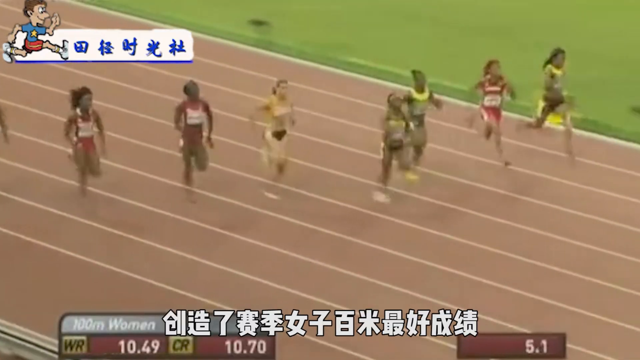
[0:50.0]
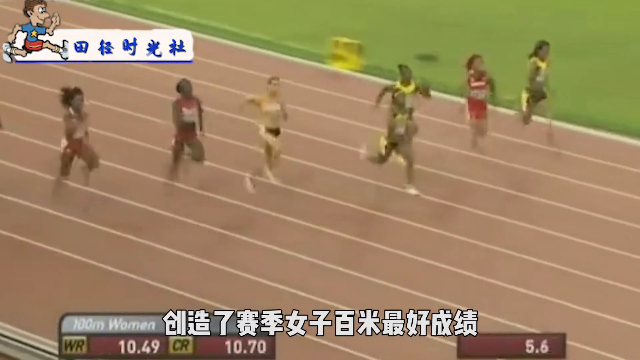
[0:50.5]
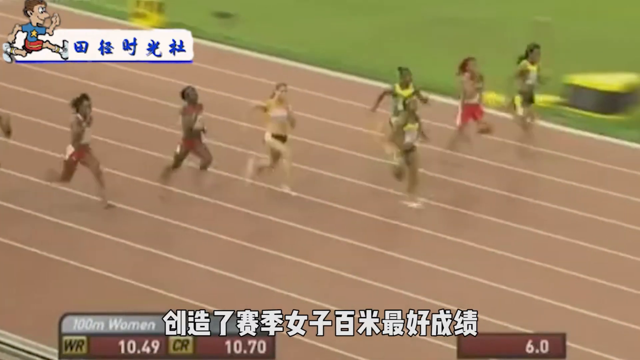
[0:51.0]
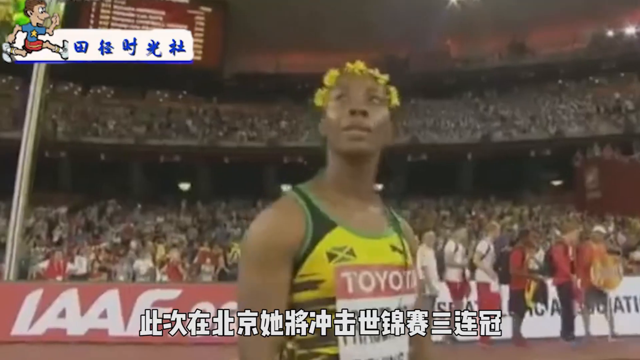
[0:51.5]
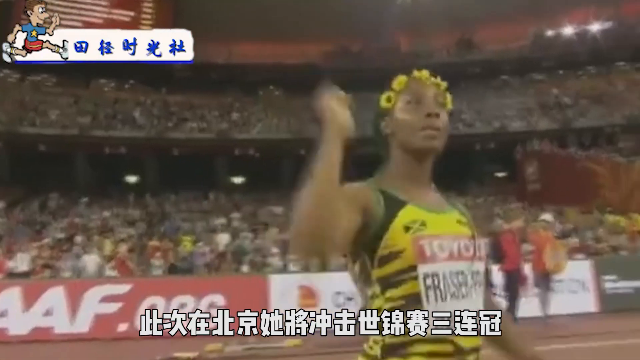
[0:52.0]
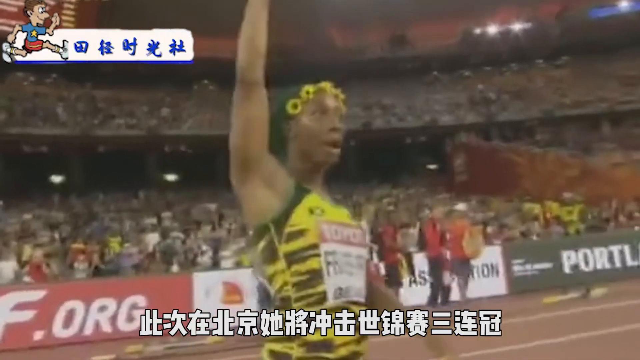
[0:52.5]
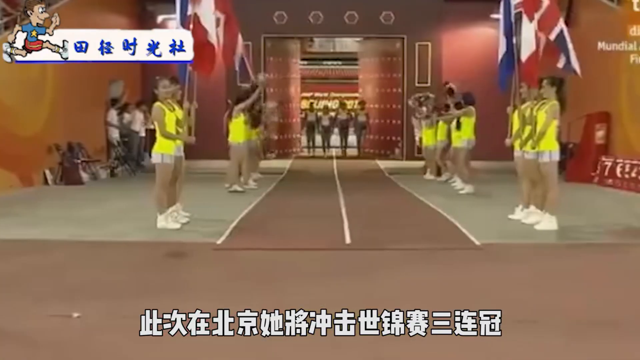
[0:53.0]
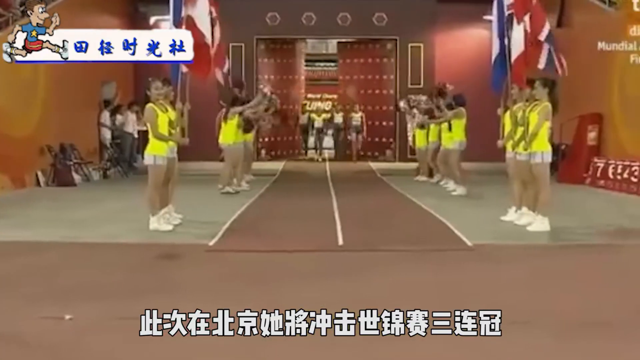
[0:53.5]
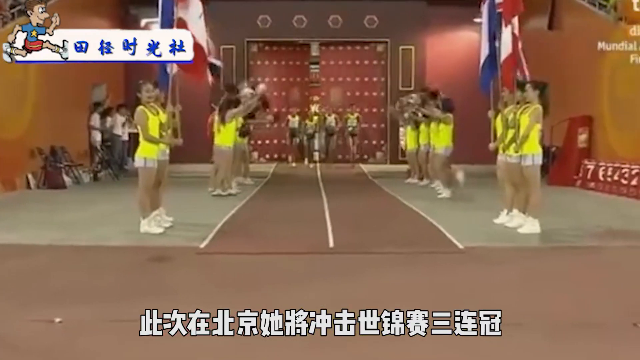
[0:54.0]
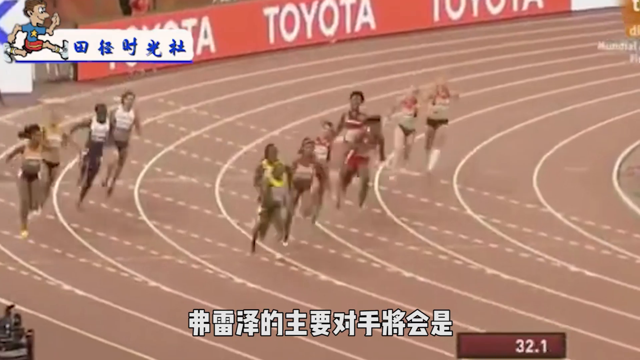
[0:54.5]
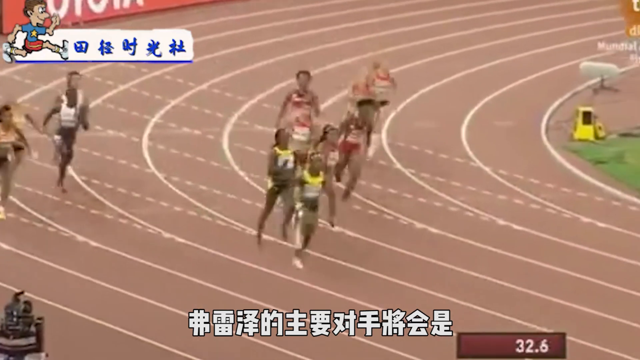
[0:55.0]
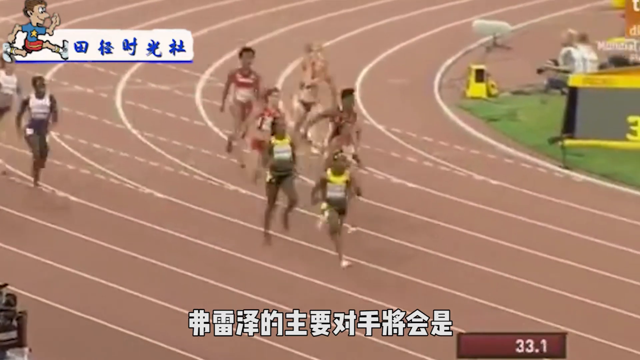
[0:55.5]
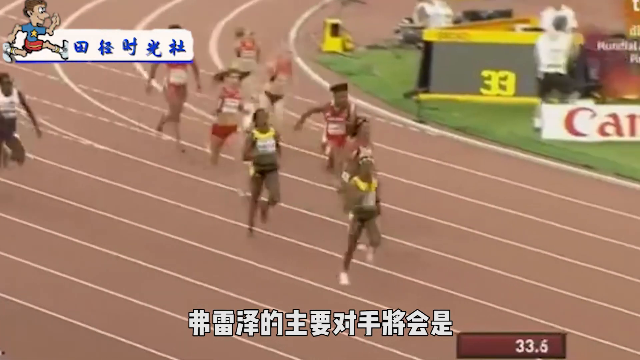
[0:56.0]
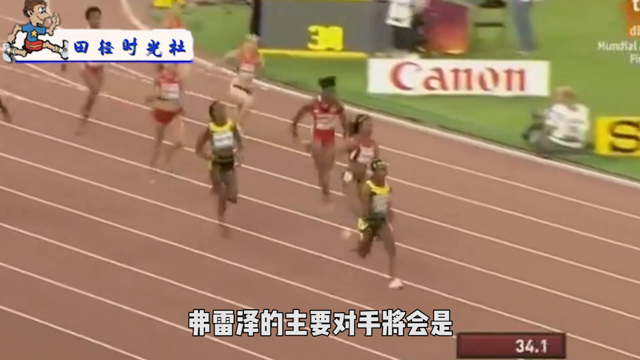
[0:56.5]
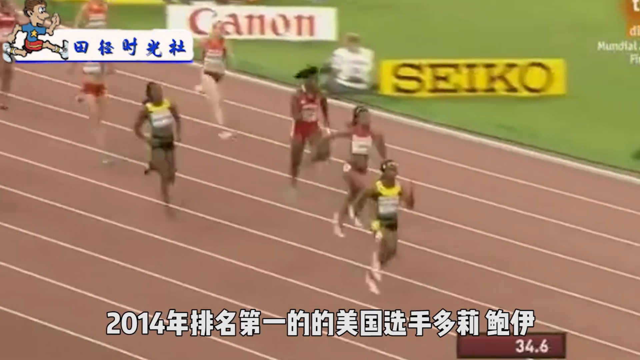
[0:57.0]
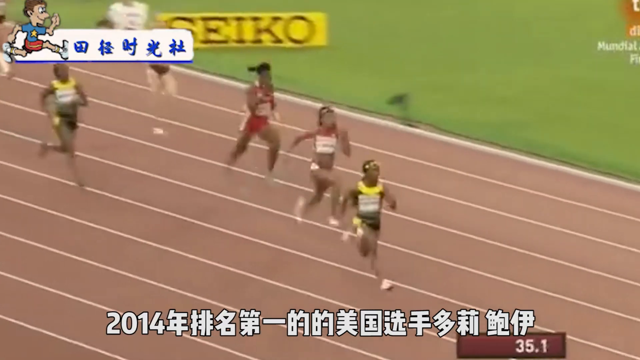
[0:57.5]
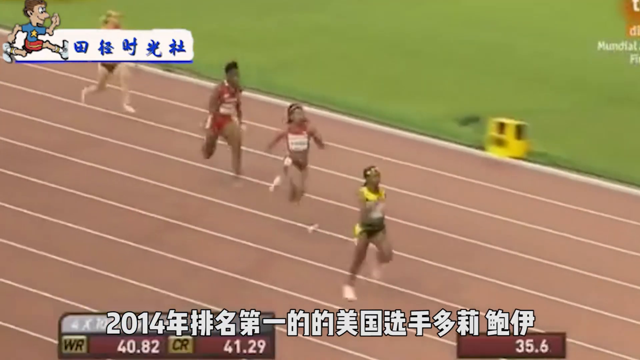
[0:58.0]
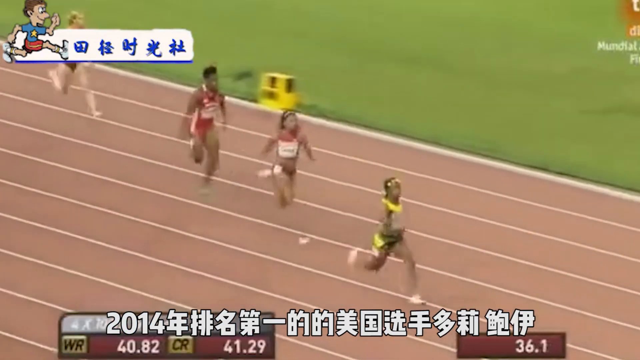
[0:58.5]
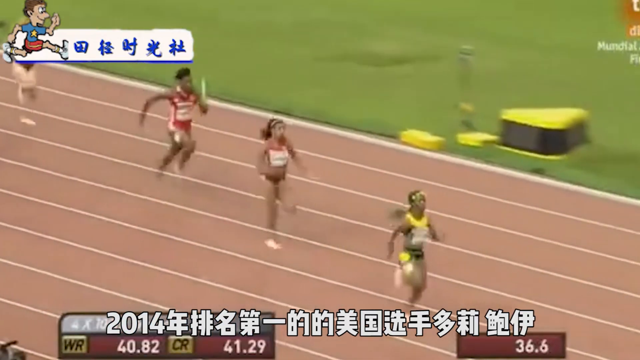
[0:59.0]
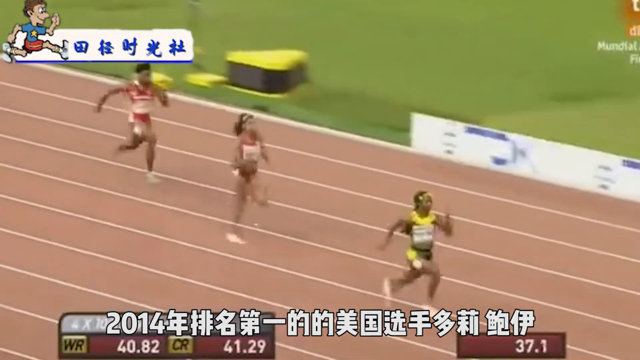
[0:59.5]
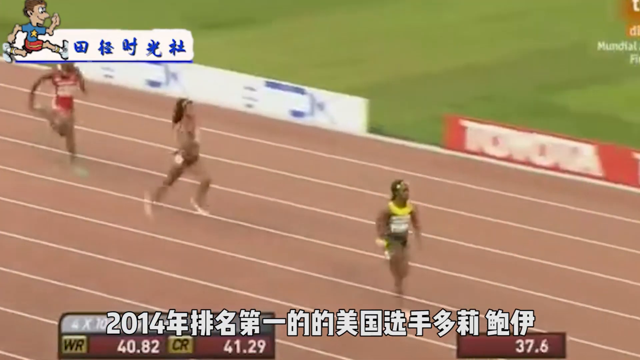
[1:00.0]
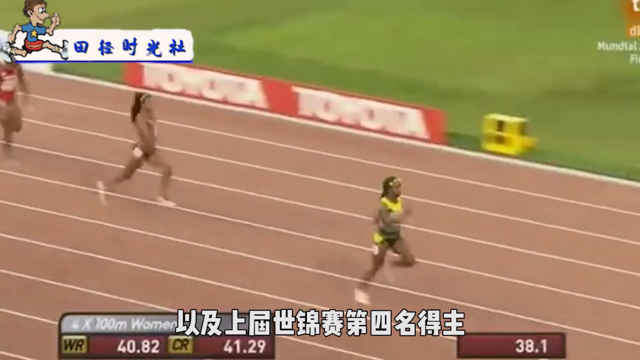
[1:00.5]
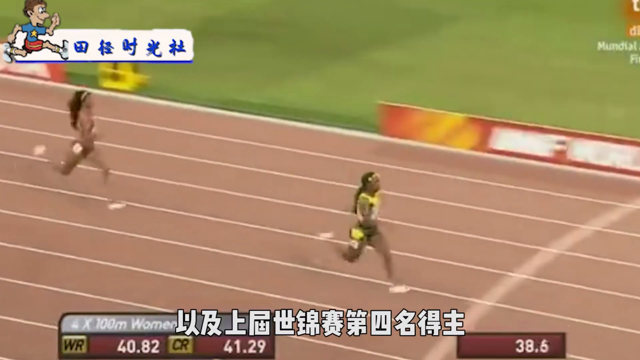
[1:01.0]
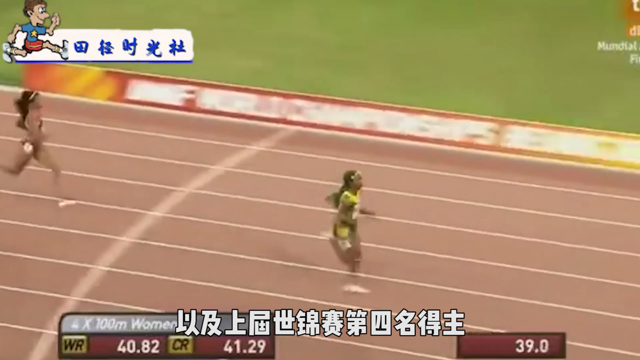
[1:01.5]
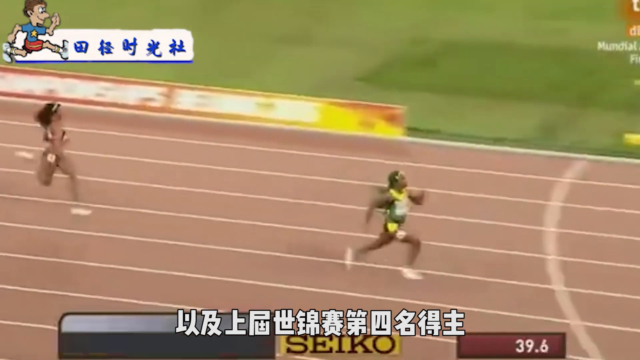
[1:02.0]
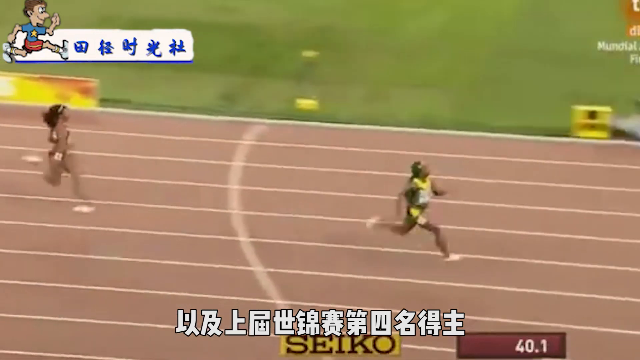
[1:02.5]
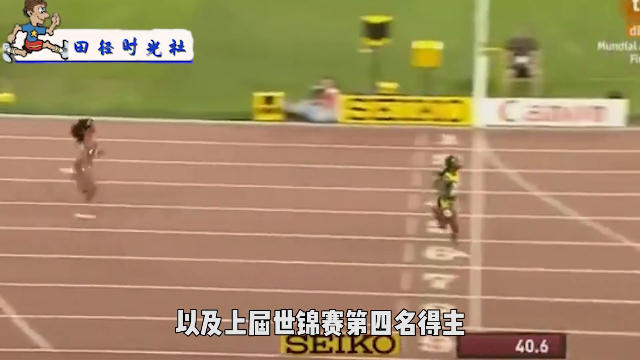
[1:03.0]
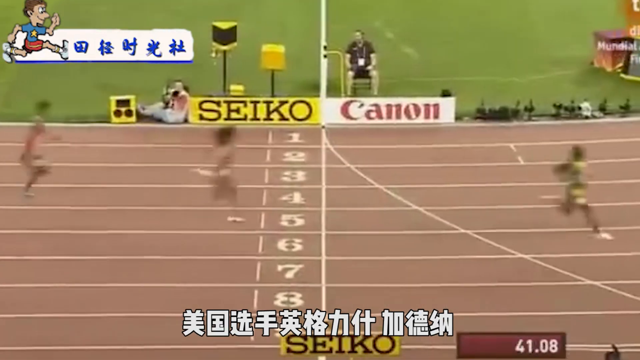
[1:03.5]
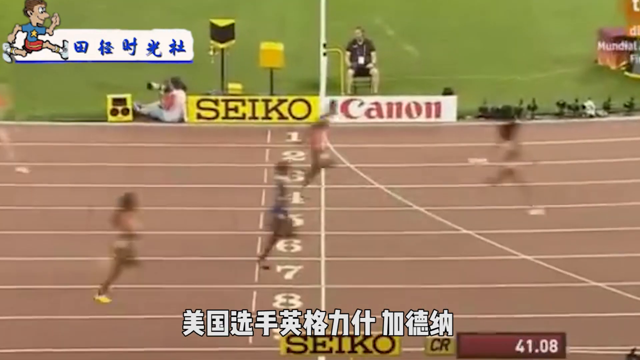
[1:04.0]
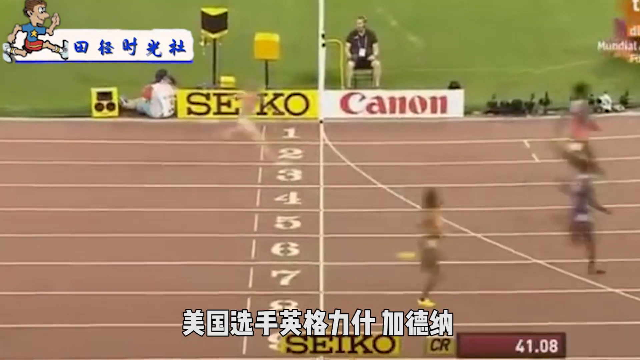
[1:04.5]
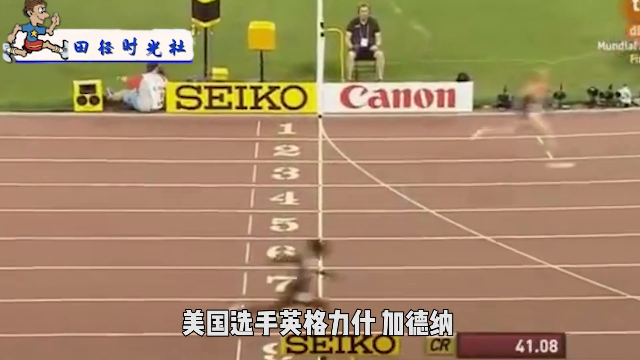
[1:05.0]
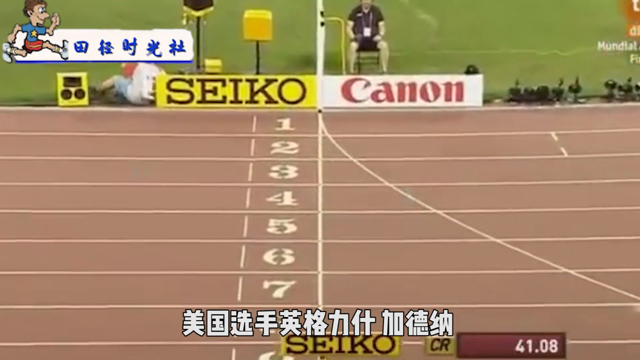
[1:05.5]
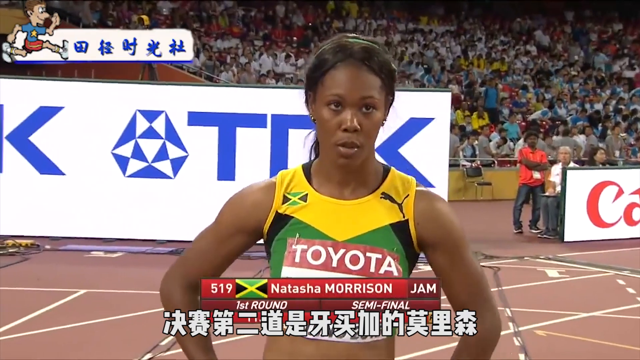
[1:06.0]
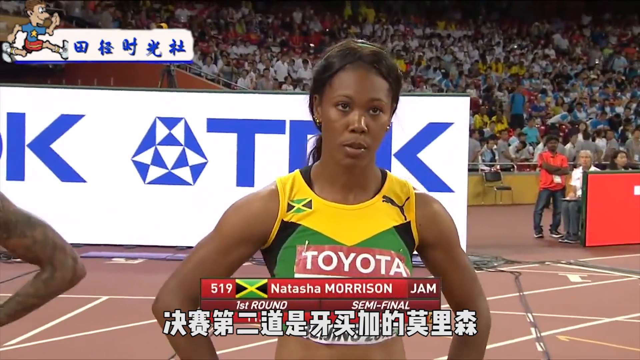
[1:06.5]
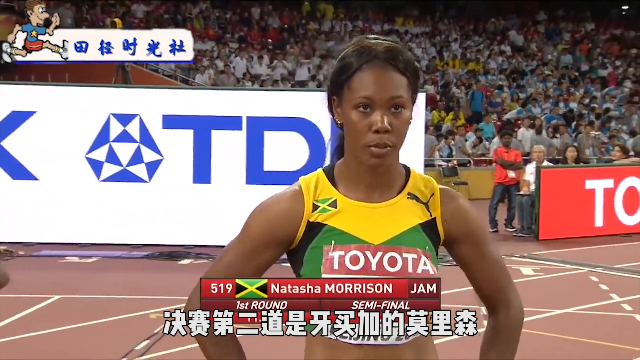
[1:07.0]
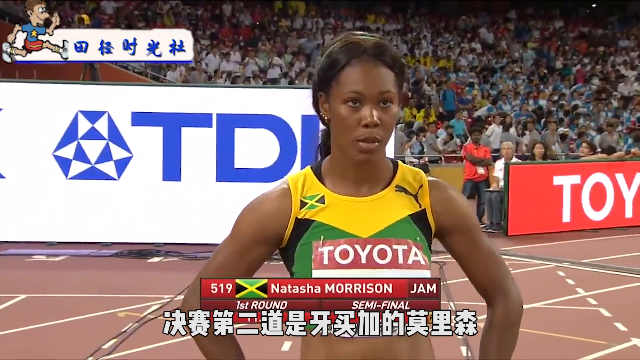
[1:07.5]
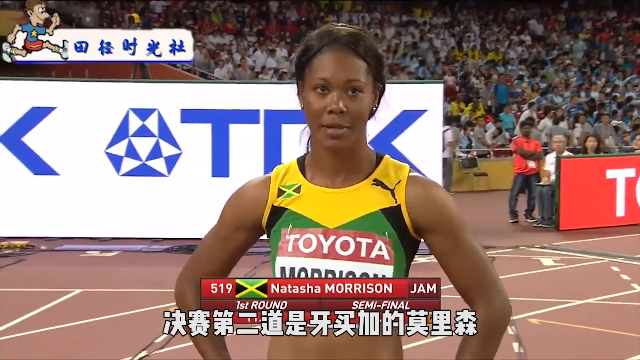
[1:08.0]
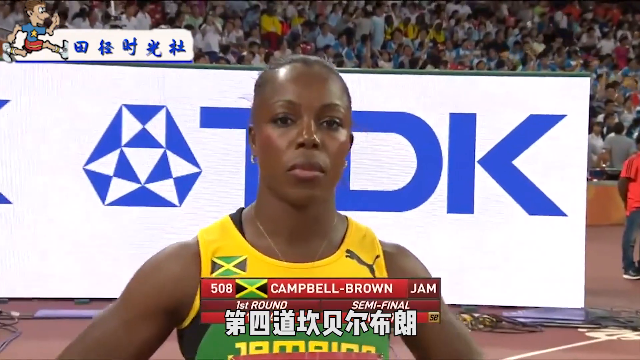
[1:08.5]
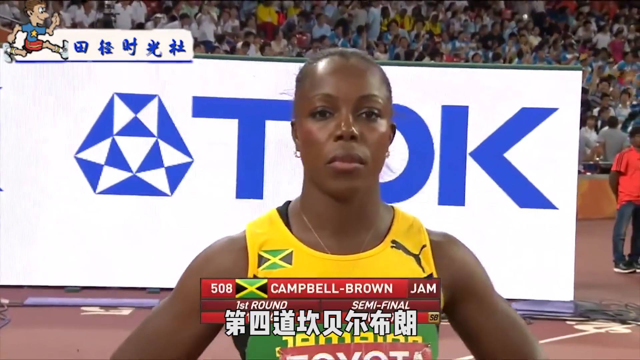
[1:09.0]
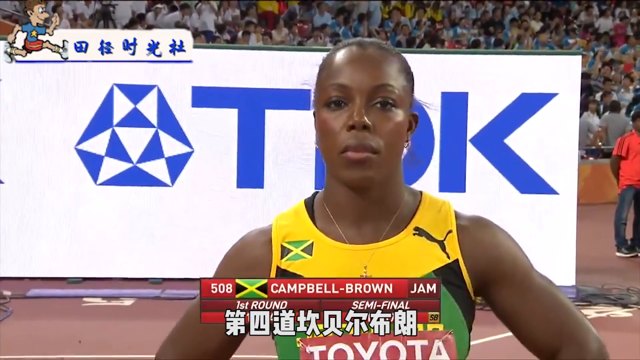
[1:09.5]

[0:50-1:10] The group of women runs down the track, probably getting about half of the race done. The video then cuts to an individual shot of an American sprinter wearing a crown of yellow flowers on her head, with the word "Toyota" on the front of her uniform. The crowd is visible in the background, and it looks like most of the seating in the stadium is full. She waves her hand, apparently in victory. The footage is somewhat disjointed: women come out of a tunnel, and then it returns to the original race, showing the person who is winning at that point.